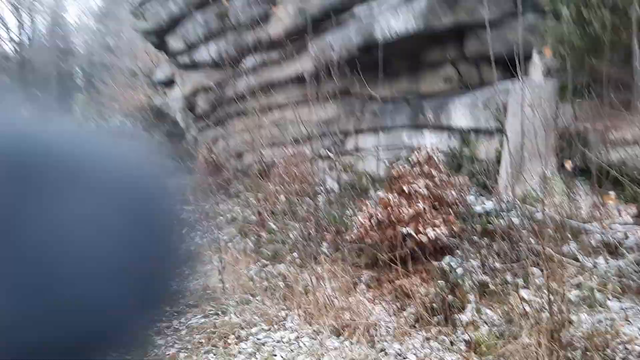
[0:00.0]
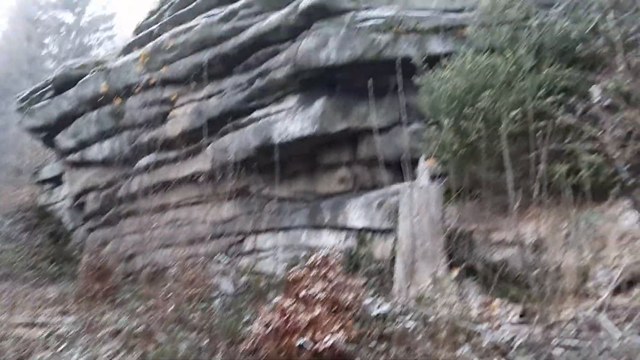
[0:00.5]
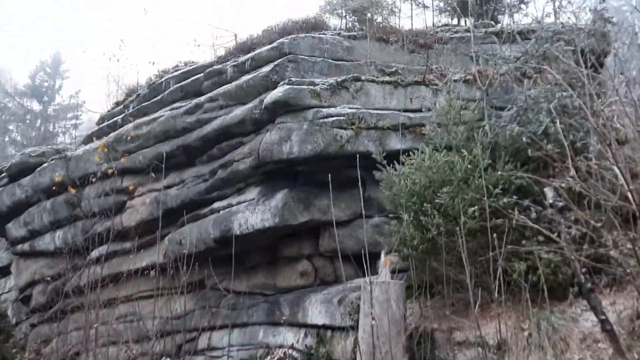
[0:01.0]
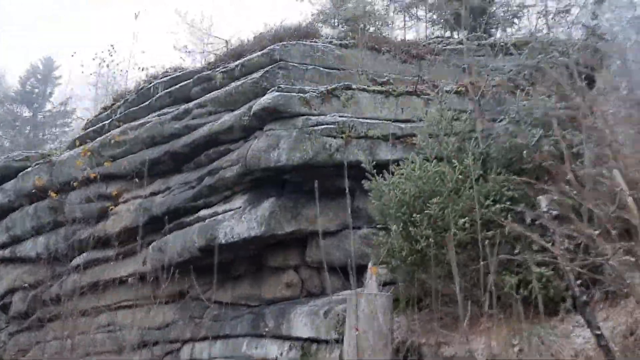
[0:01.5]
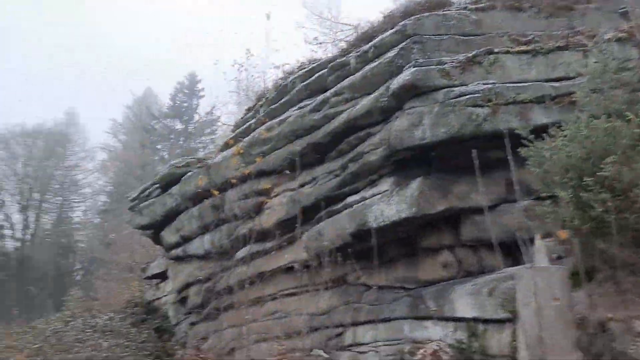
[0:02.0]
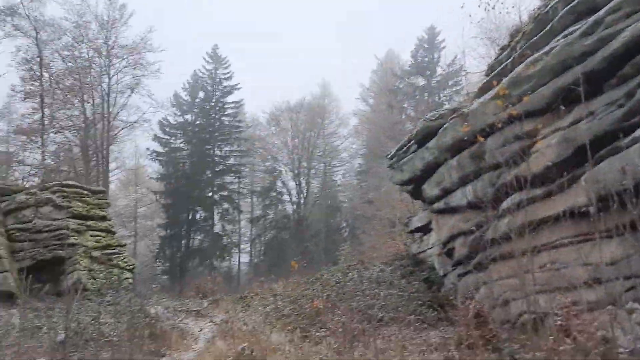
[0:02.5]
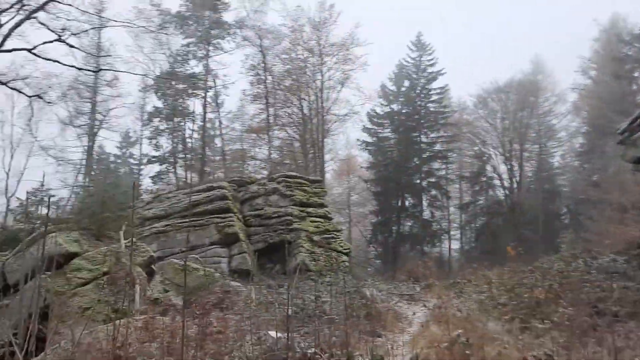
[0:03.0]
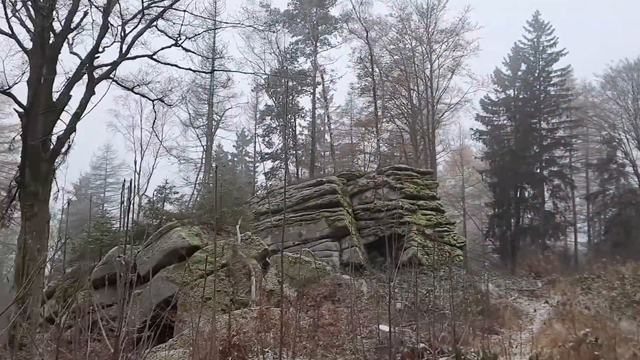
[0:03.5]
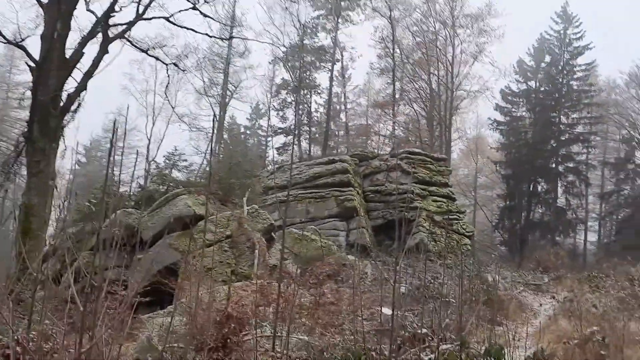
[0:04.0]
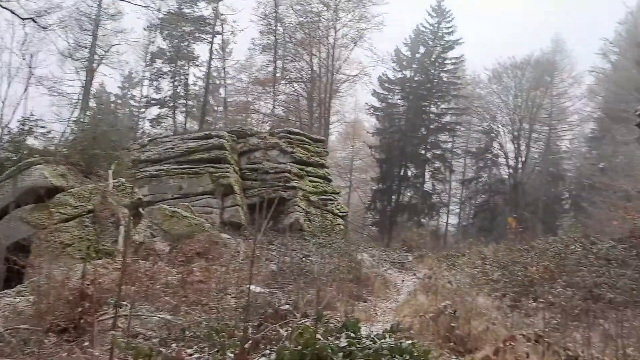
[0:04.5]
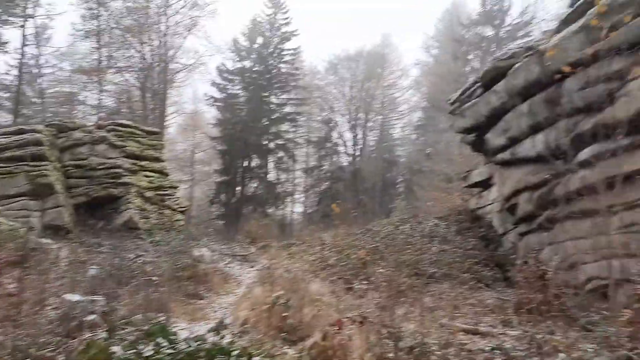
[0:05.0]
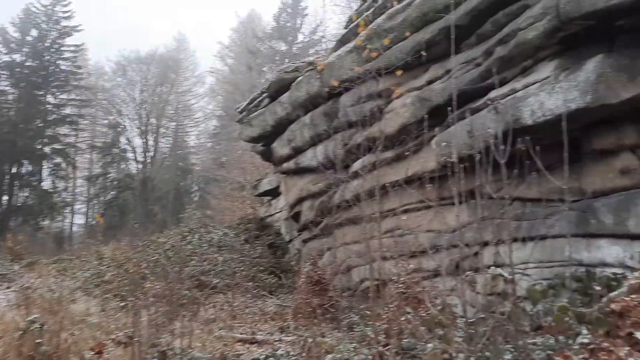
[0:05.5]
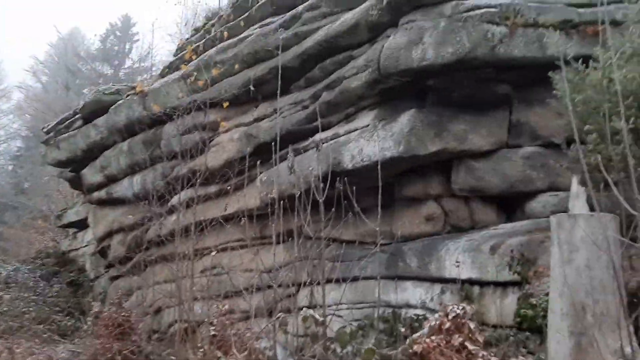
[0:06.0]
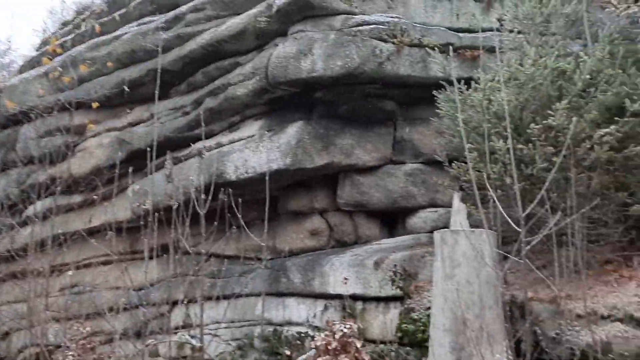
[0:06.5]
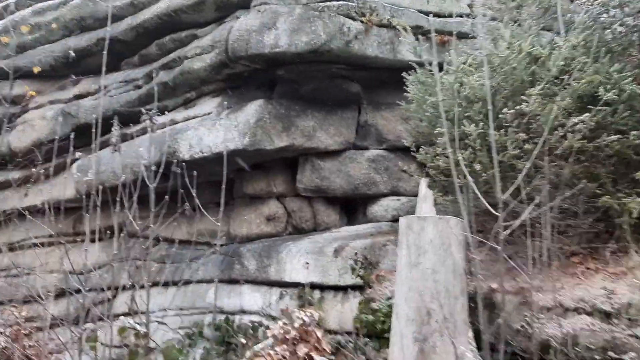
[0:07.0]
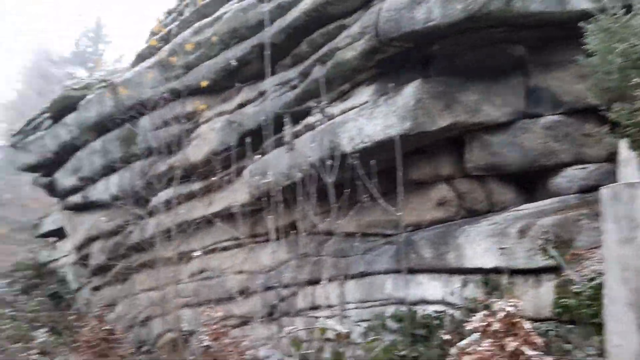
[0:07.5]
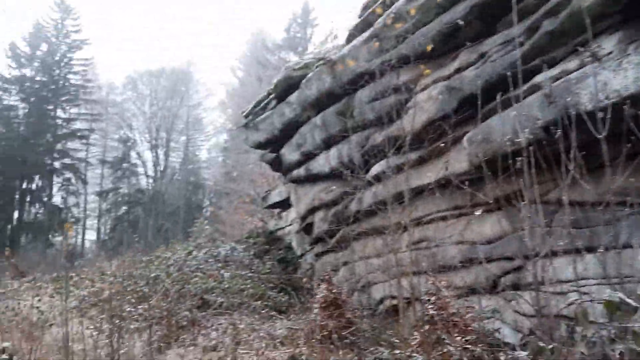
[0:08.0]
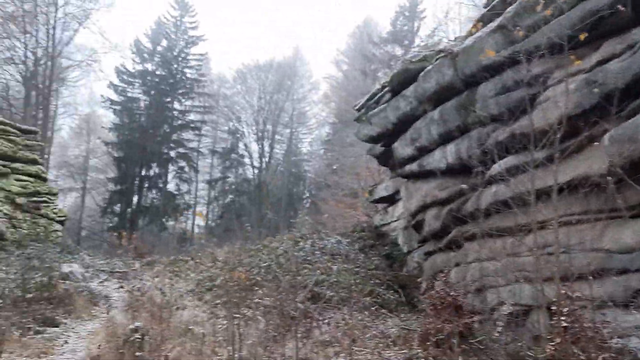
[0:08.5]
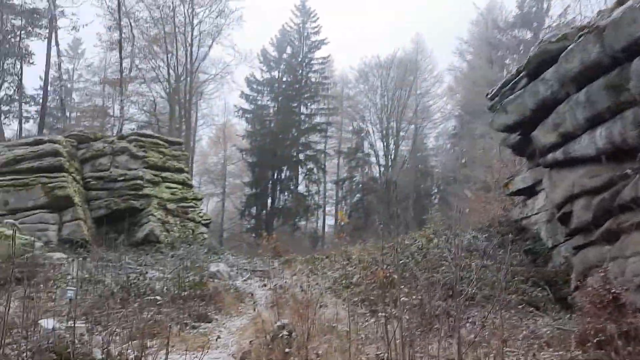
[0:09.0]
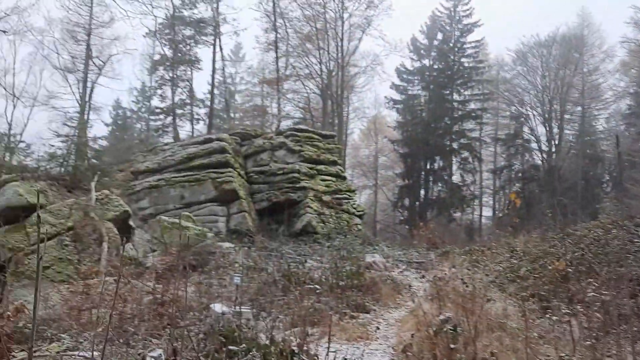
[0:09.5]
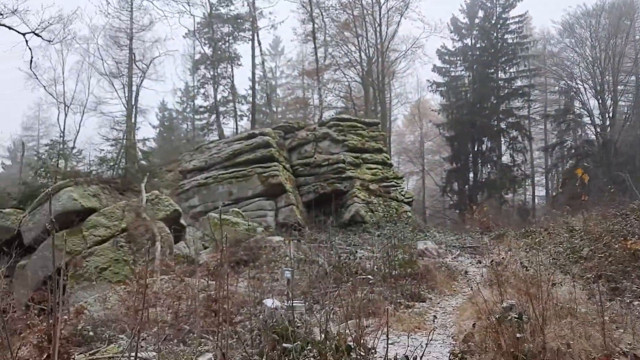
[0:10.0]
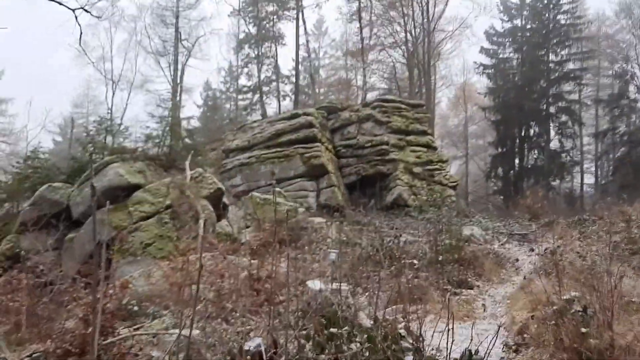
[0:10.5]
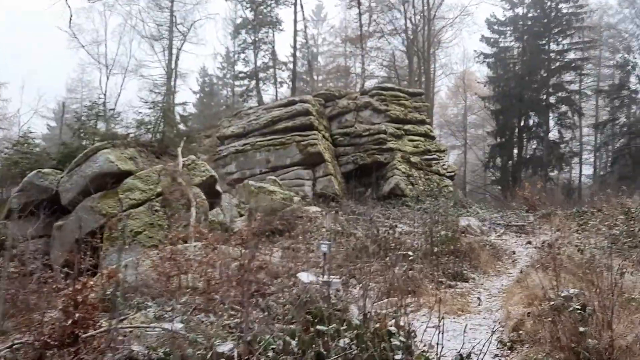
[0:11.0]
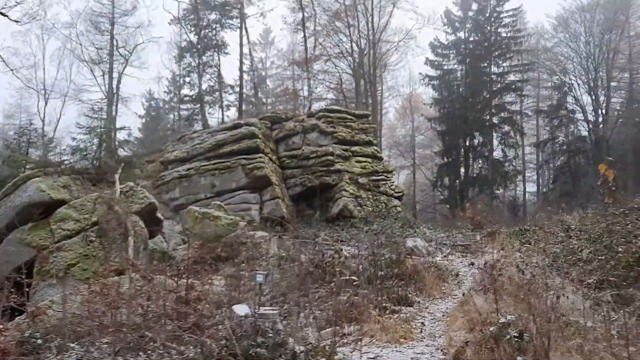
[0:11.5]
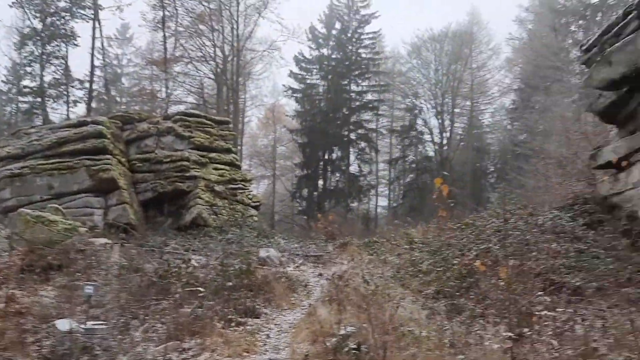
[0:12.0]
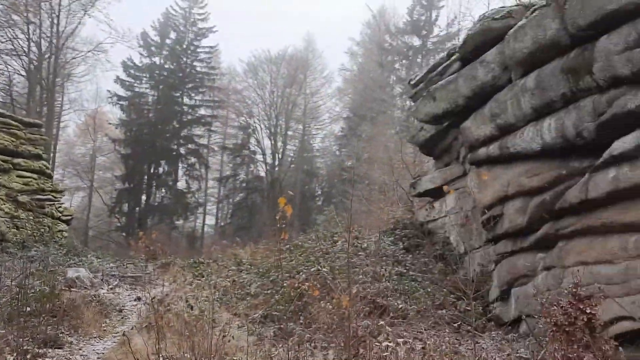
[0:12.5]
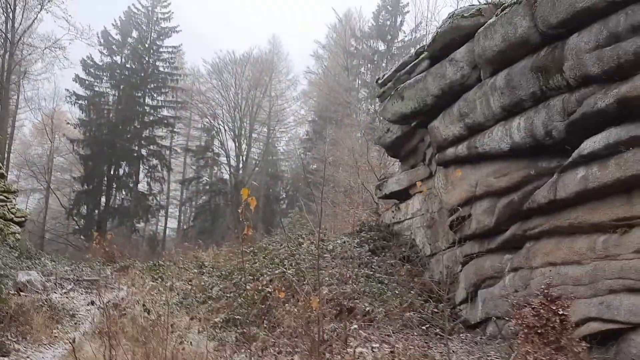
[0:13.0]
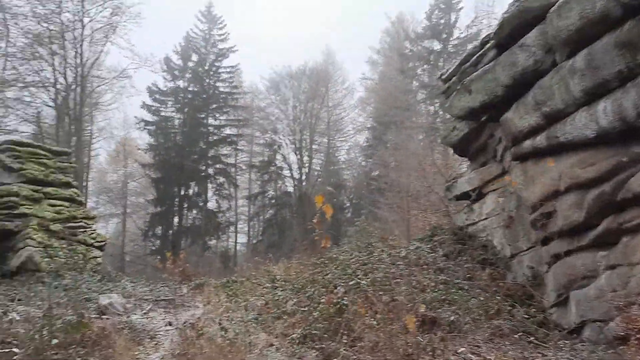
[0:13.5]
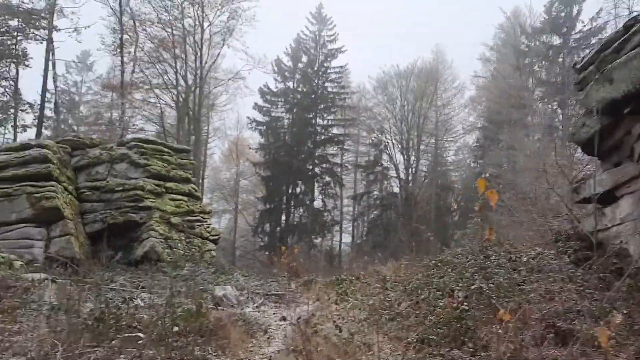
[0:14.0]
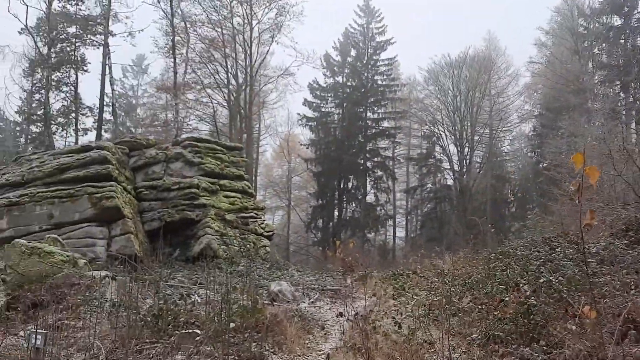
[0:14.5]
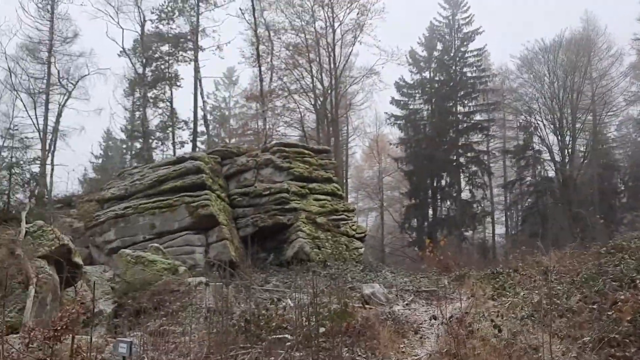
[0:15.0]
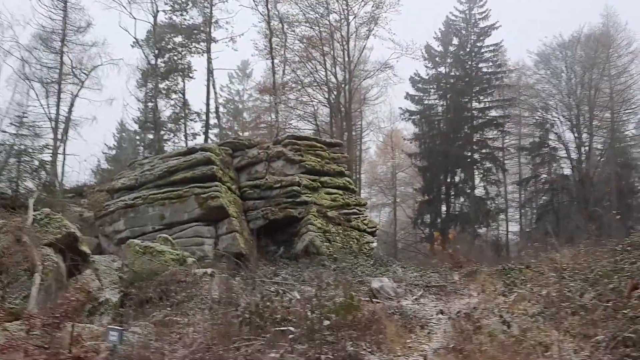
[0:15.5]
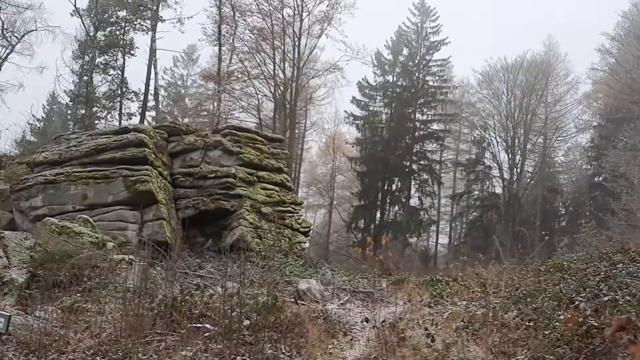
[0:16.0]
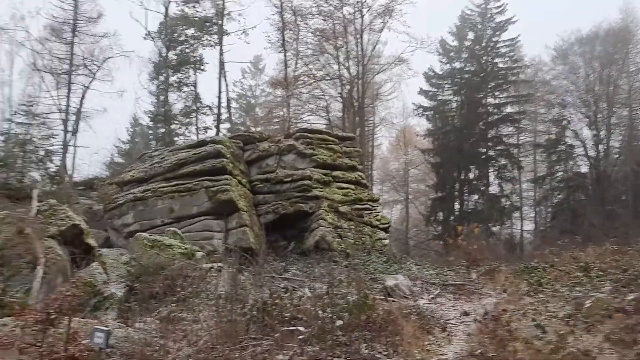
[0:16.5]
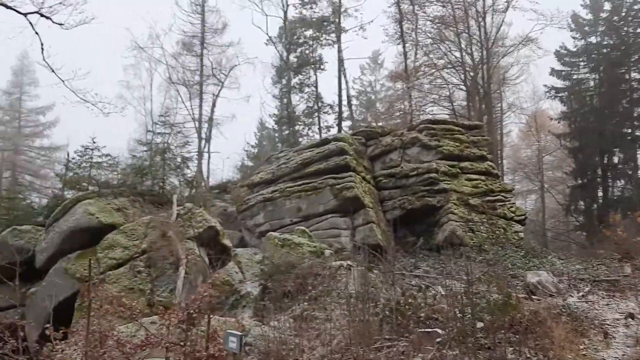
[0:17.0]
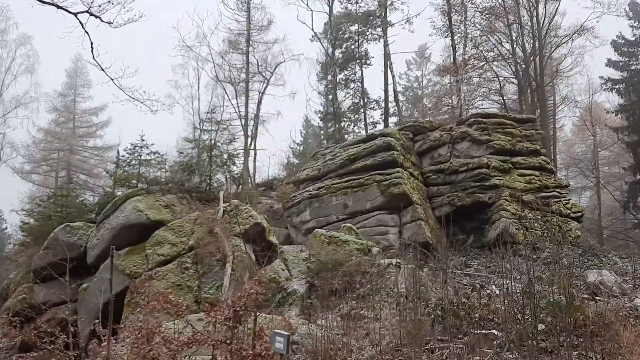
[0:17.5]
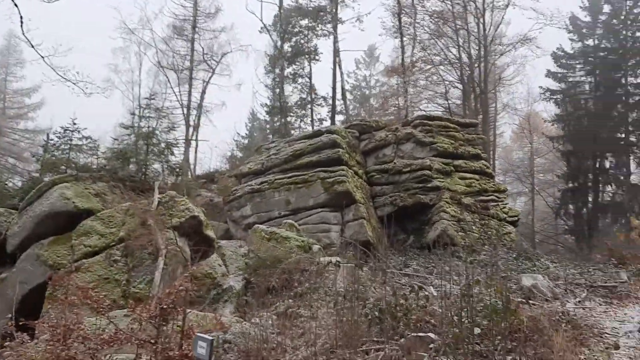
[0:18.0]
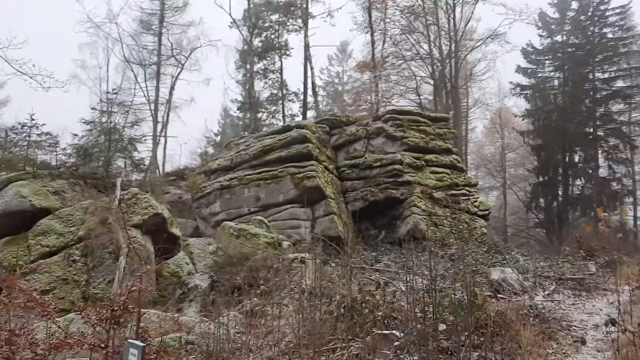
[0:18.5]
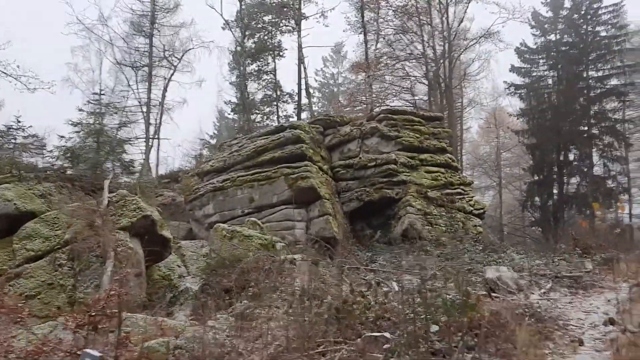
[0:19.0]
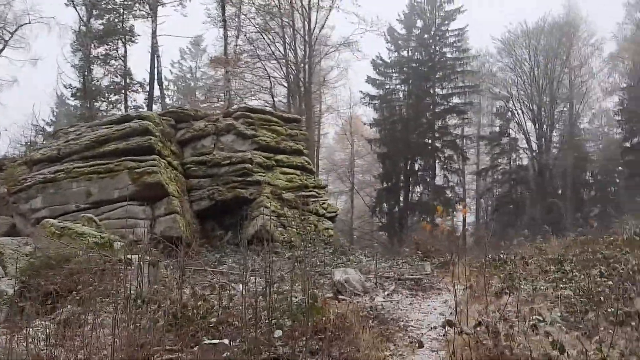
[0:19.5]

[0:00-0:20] What appears to be an outdoor hiking area has rocks jutting out of the soil, with pine trees and tall trees all around. The person filming pans from left to right across the rock formations. It may be fall or winter: the trees that would normally have leaves look barren, while the pine trees still have their needles. The coloring is kind of drab, like an overcast day. Most of the rocks are gray, brown, and white, and some have almost a greenish color, possibly discoloring, growth or staining, maybe from being in the shade. Dried-up grass and twigs cover the forest floor.